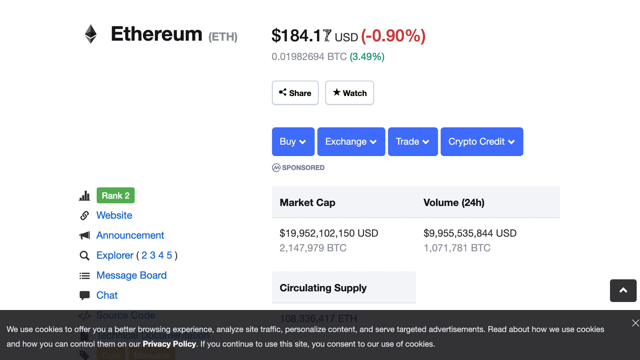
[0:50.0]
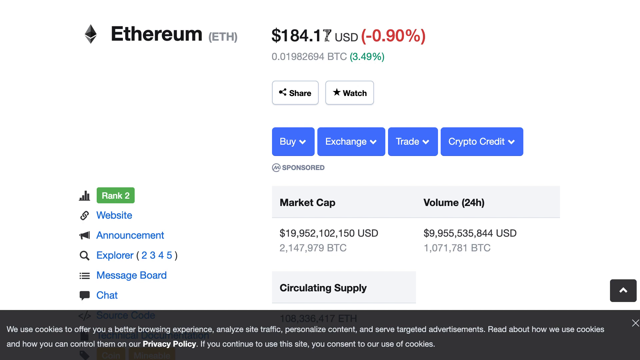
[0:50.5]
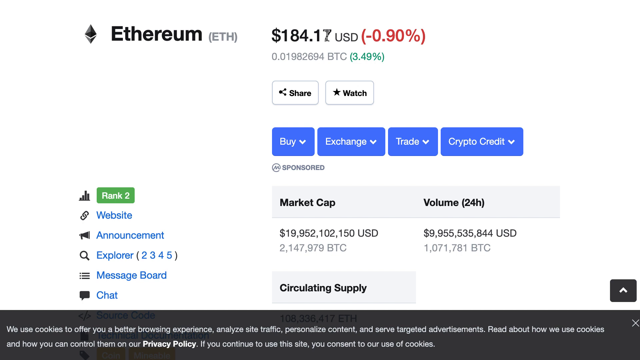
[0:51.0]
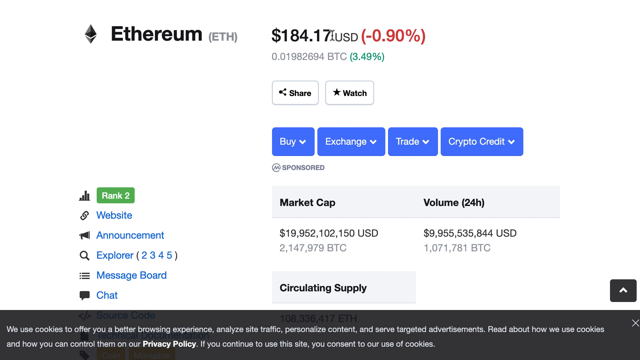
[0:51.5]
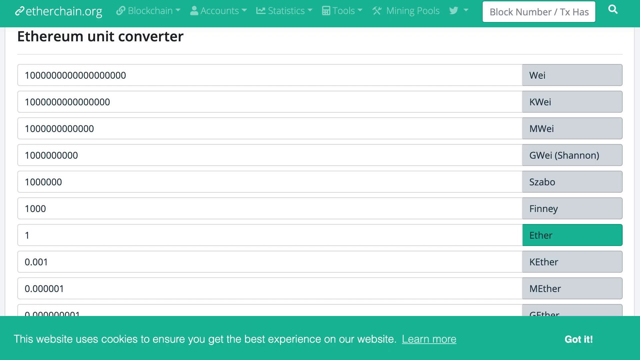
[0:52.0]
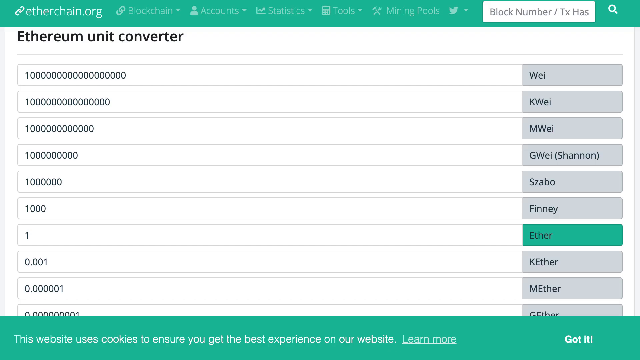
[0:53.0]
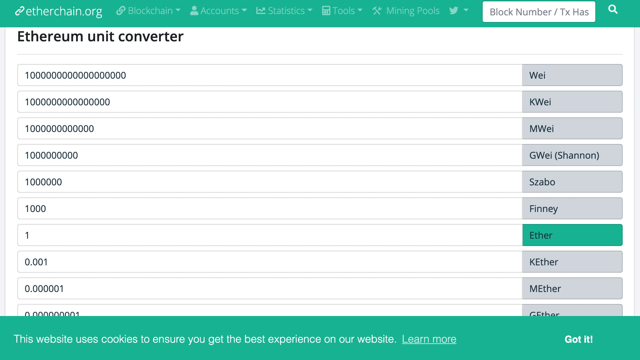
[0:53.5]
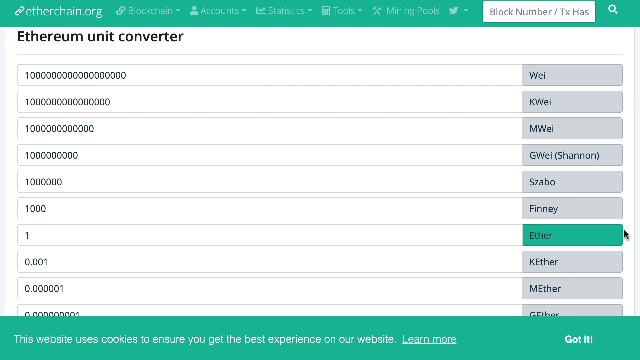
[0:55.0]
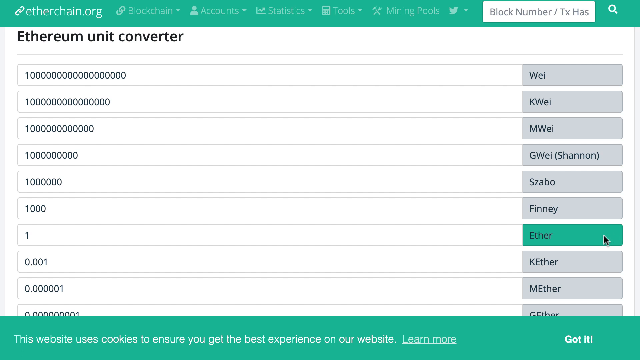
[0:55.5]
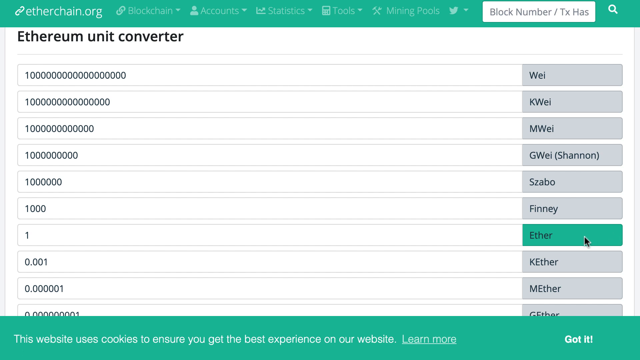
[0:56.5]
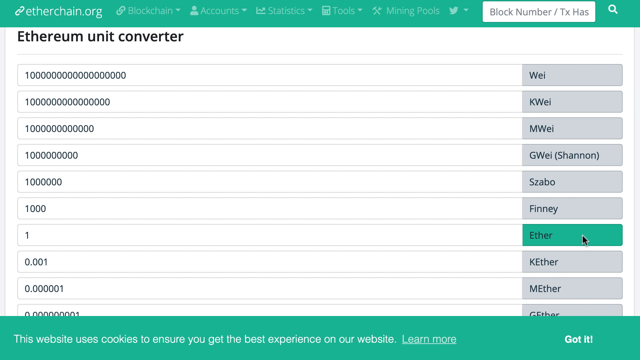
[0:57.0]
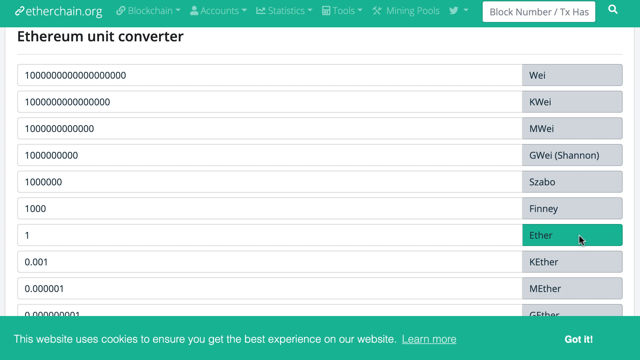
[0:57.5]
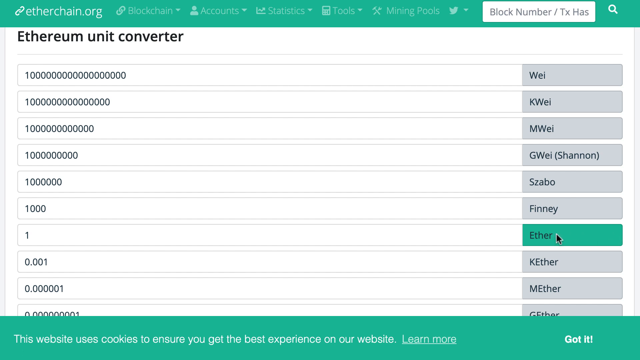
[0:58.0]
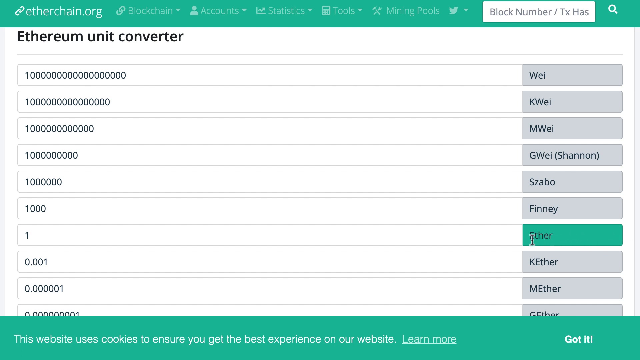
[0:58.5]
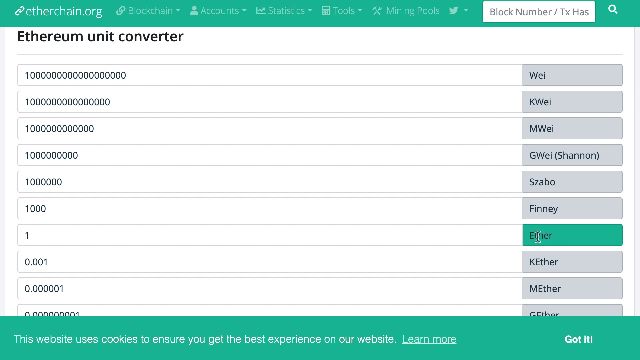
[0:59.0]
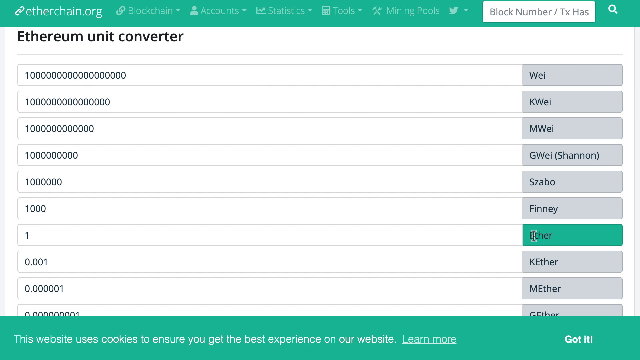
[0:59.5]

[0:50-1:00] A page shows a breakdown for Ethereum, with "ETH" in capital letters in parentheses, and gives many kinds of information. There are share and watch buttons, a market cap, and a volume labeled "(24H)", with very large numbers for both the market cap and the volume. A circulating supply section is at the very bottom in the middle. Next a chart titled "Ethereum unit converter" appears, with a green rectangle at the top holding some information. Numbers run down the left side of the page, and gray boxes are on the right, one of which says "Ether" in green.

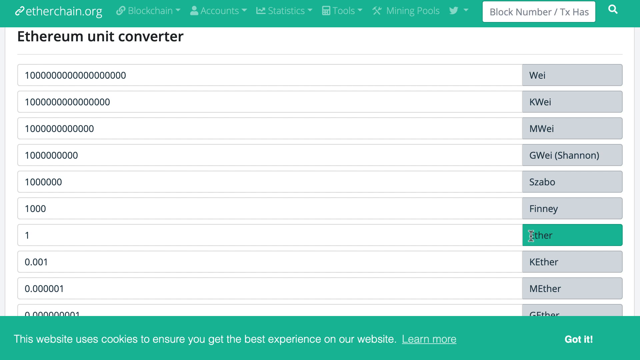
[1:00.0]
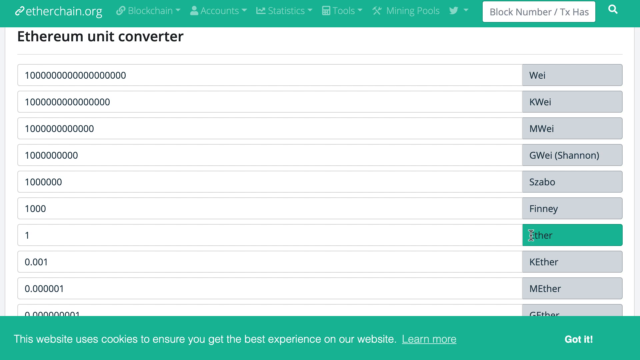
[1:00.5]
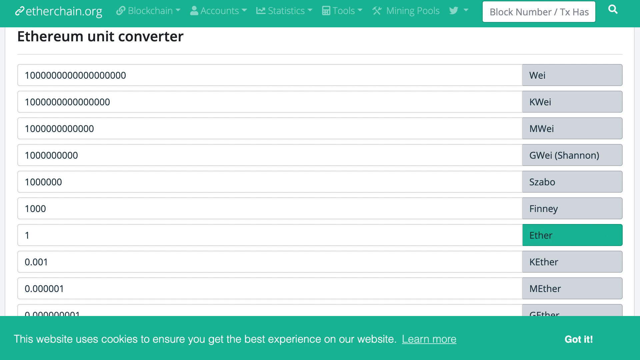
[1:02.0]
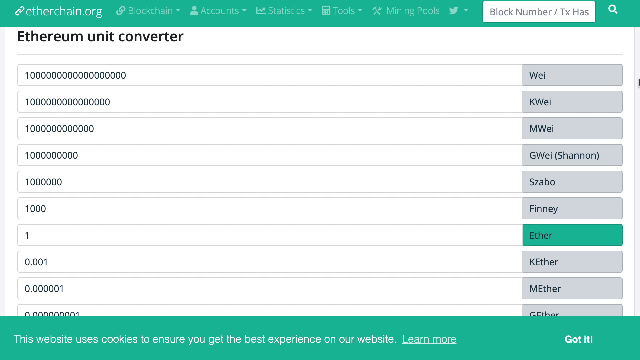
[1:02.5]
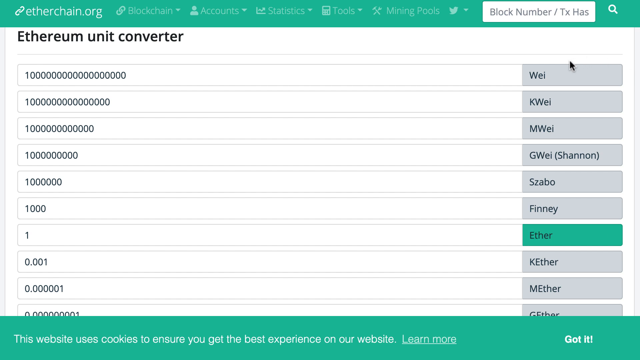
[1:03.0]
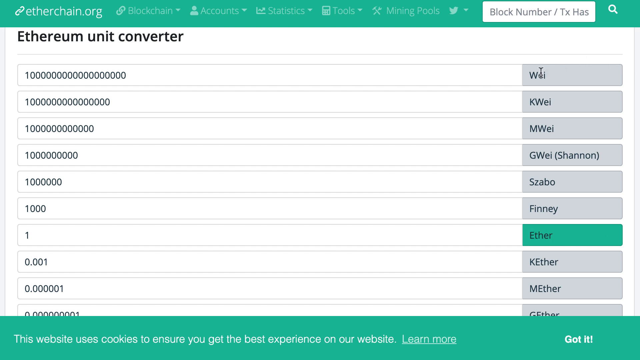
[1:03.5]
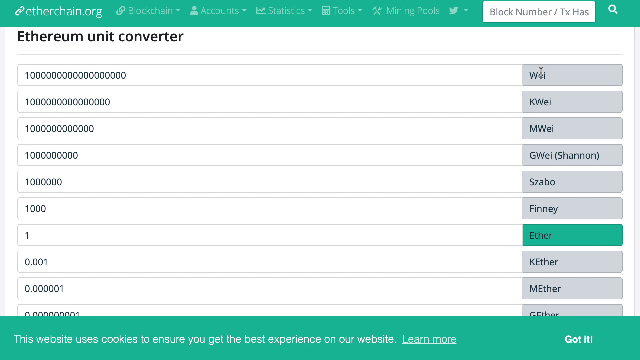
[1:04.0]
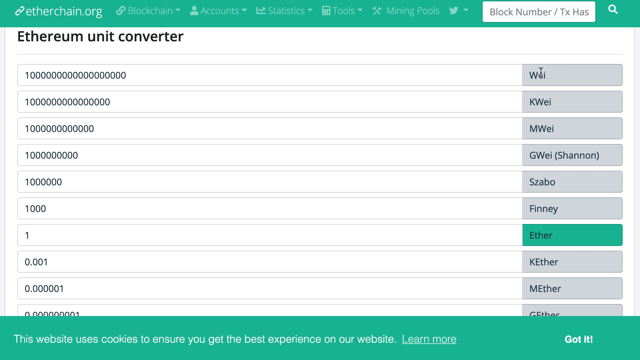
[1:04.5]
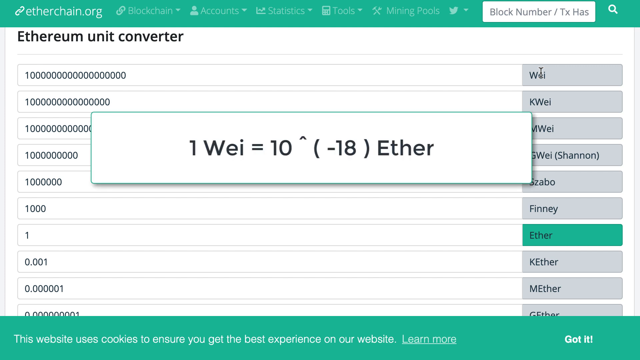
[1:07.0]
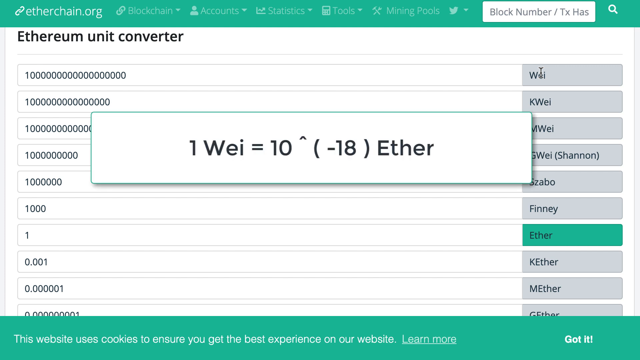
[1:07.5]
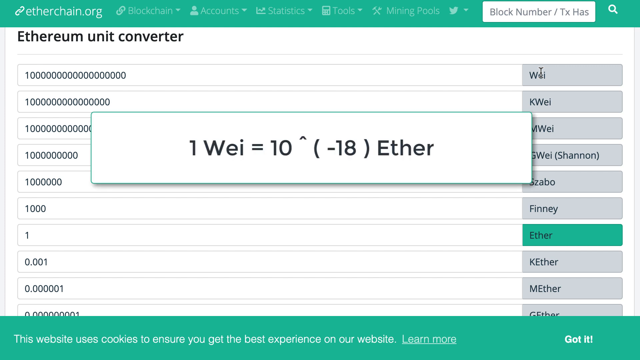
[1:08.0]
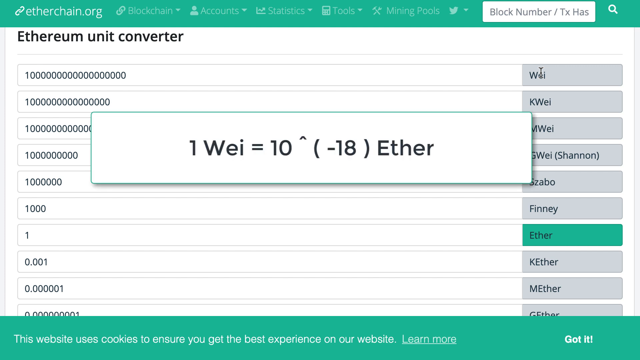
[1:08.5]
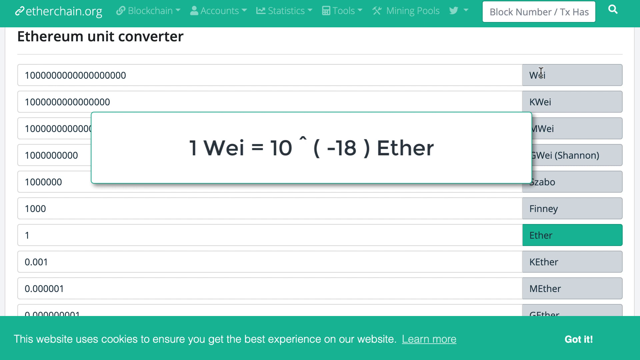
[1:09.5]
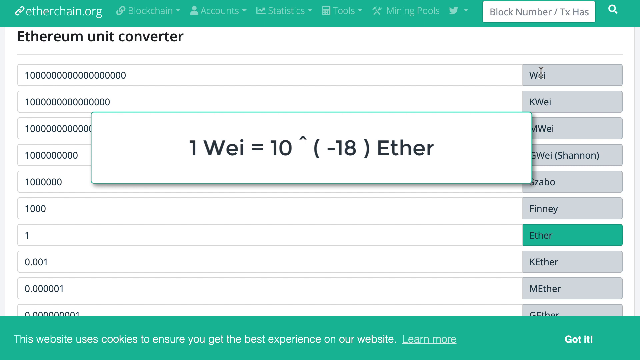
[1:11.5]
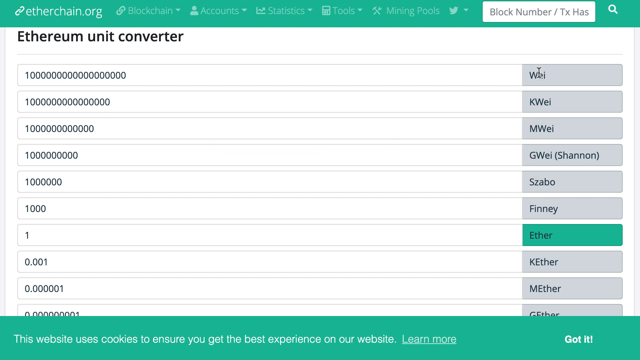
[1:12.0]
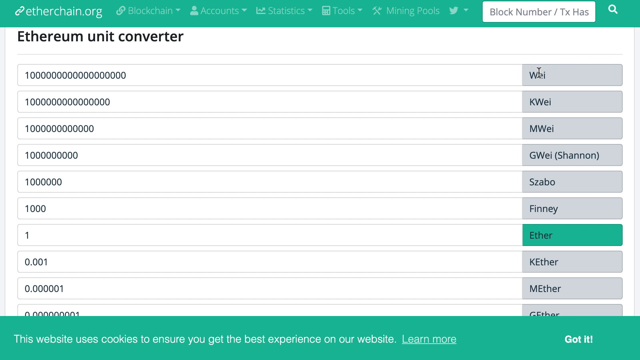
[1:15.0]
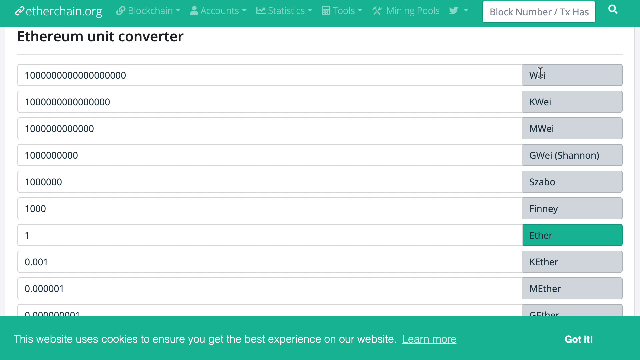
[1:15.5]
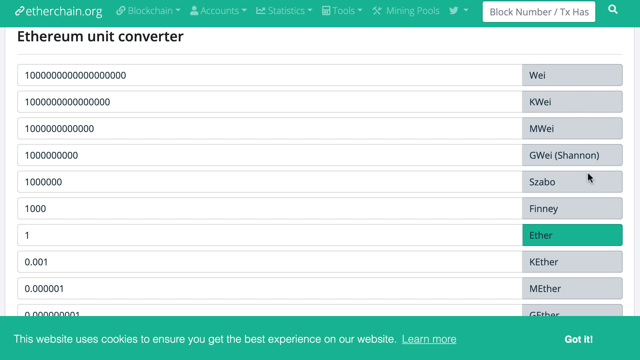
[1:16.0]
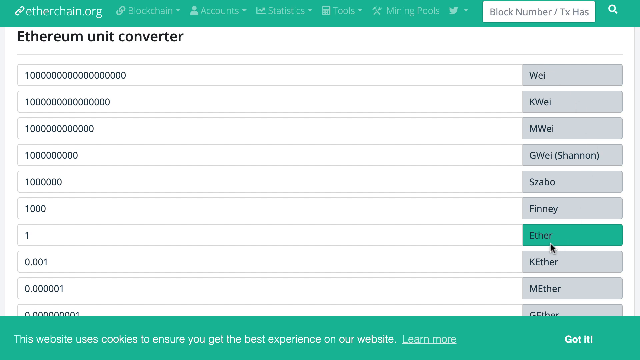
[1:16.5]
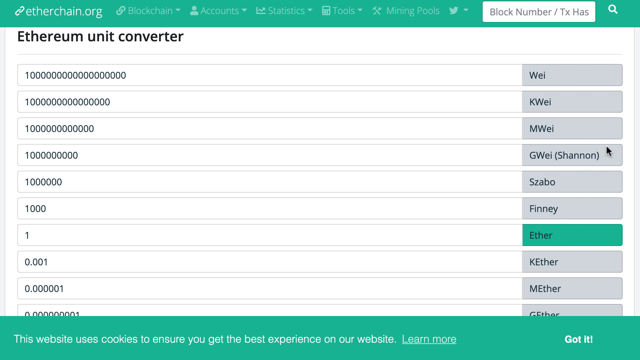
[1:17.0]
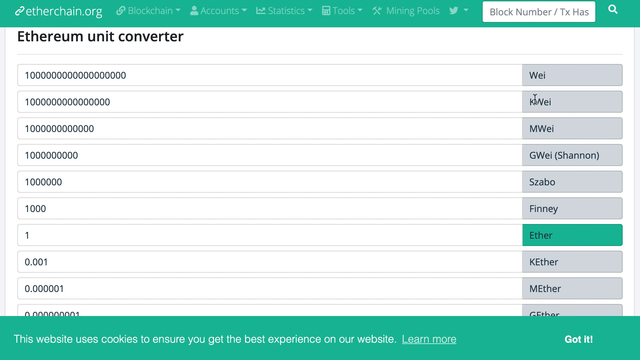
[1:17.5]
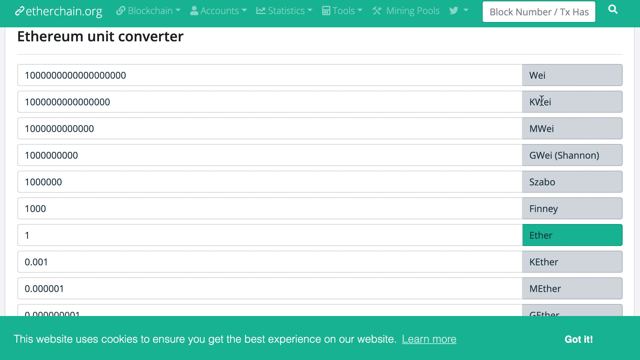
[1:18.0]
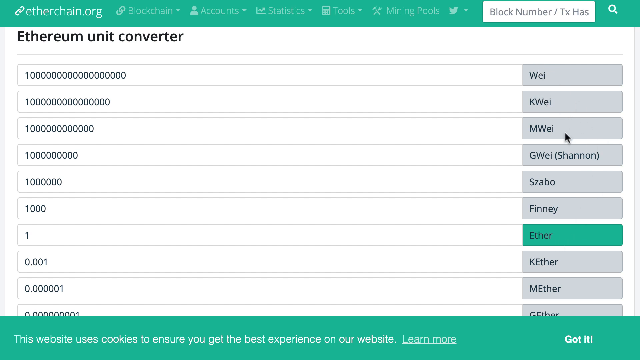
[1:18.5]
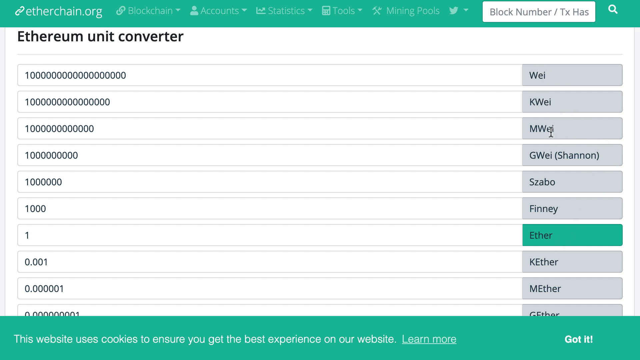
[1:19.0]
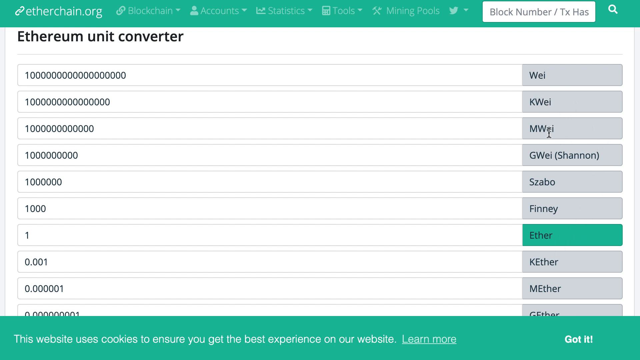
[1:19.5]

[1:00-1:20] The Ethereum unit converter page shows a series of horizontal rectangles running down the left side, each containing a number. Ether has a 1, the one above it has a thousand, and zeros keep being added toward the top, where wei has a one followed by many zeros. Boxes run down the right side with a series of unit names, including wei, Shannon, Finney and ether. Words also pop up in the middle in a large white box saying one wei equals 10 to the power of (negative 18) ether.